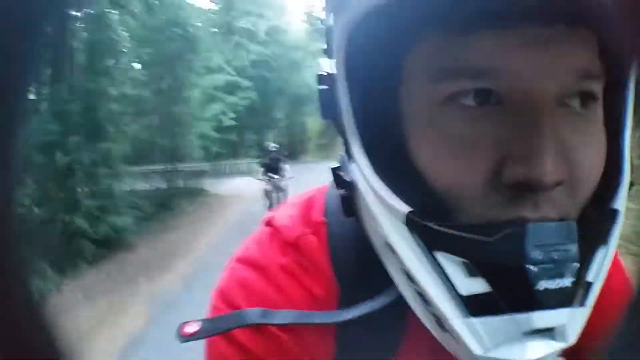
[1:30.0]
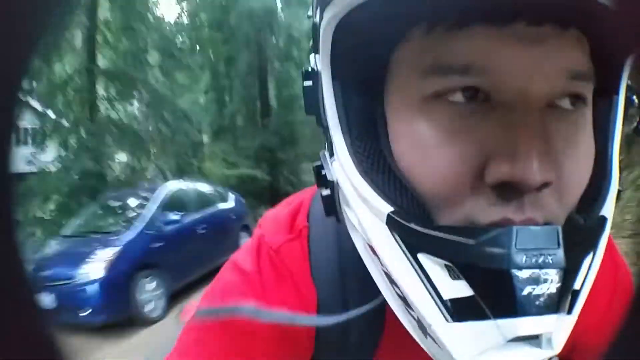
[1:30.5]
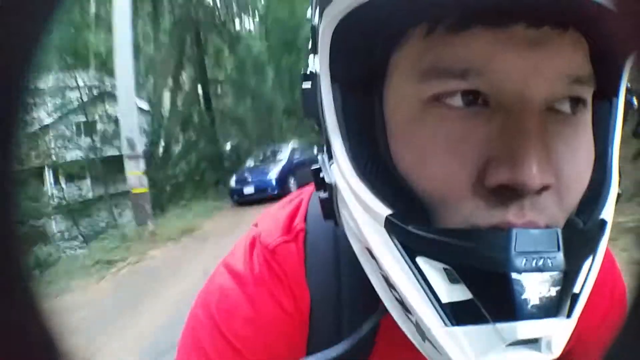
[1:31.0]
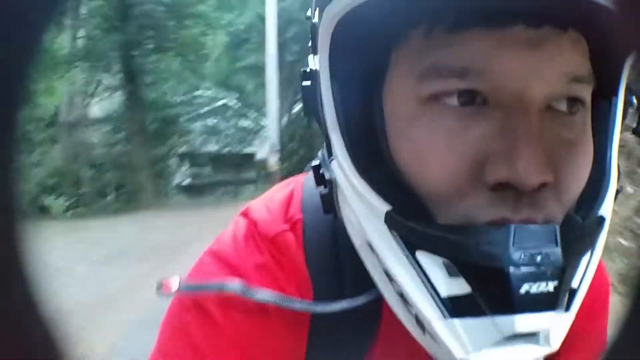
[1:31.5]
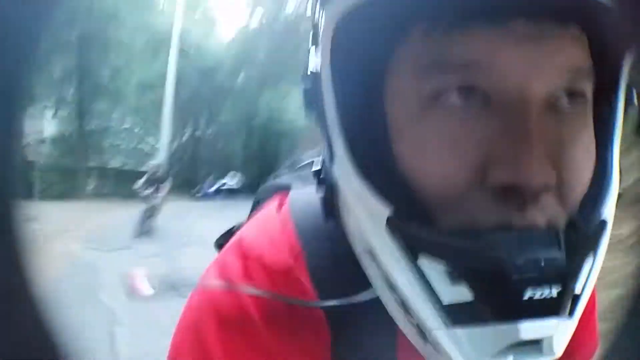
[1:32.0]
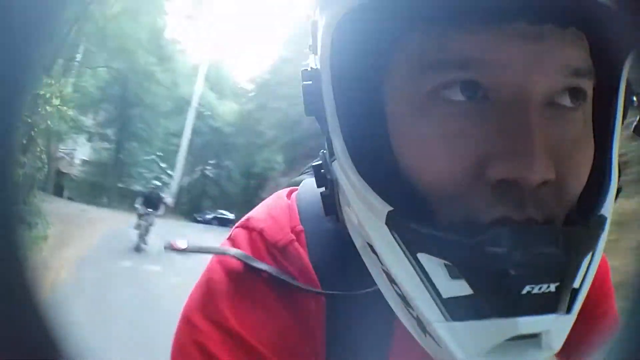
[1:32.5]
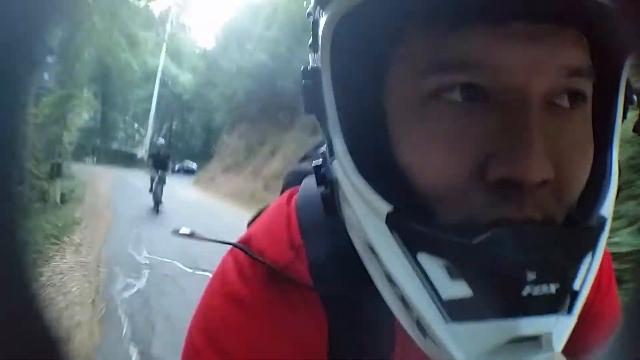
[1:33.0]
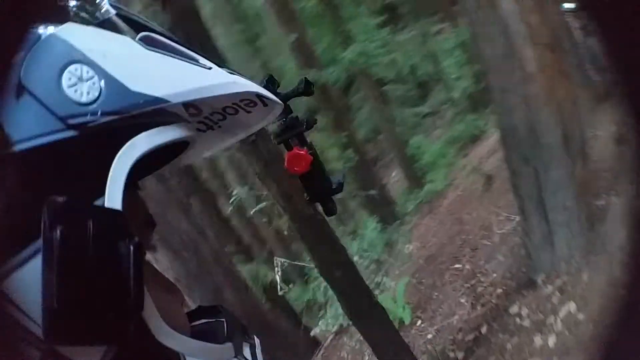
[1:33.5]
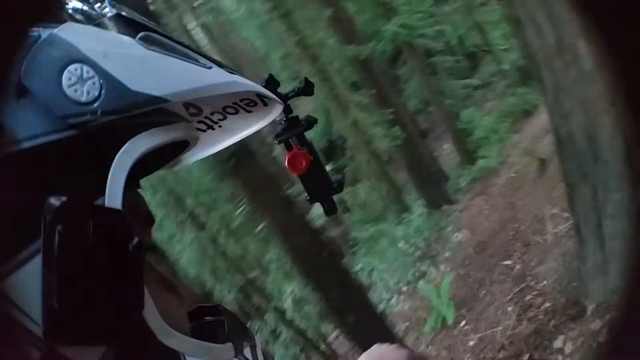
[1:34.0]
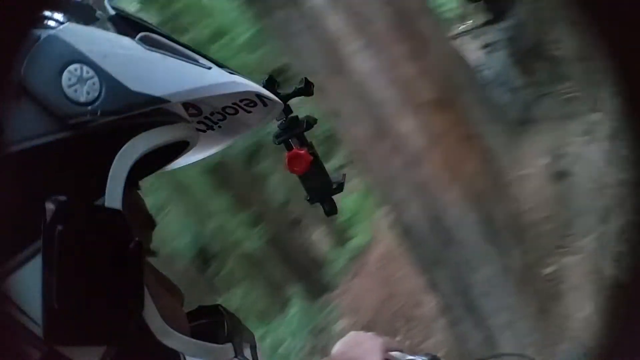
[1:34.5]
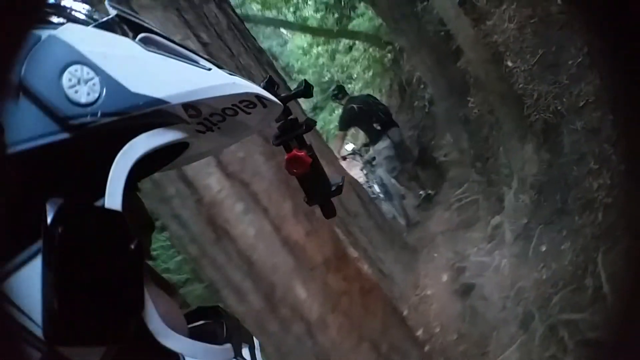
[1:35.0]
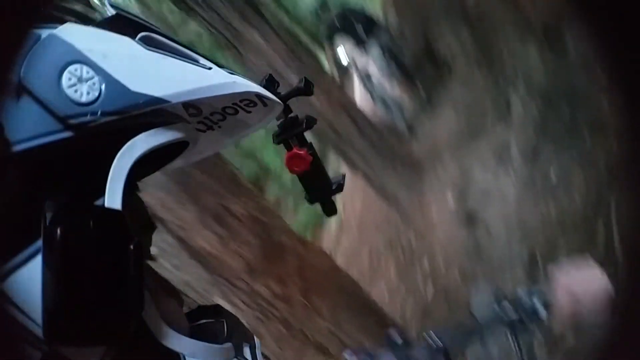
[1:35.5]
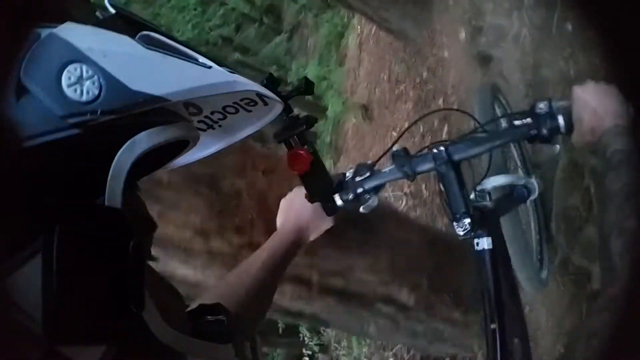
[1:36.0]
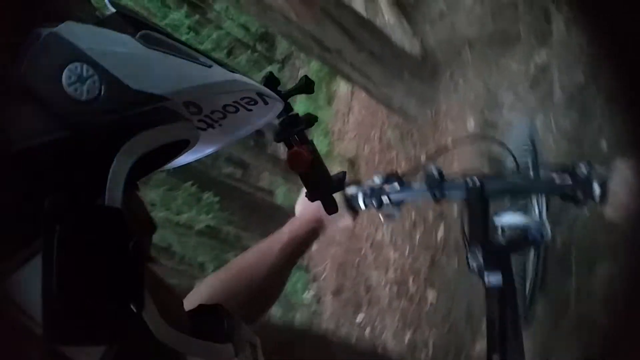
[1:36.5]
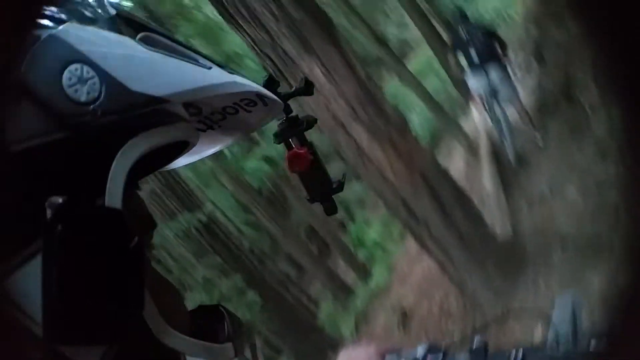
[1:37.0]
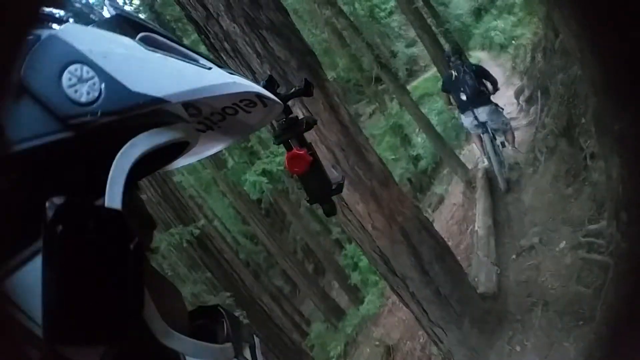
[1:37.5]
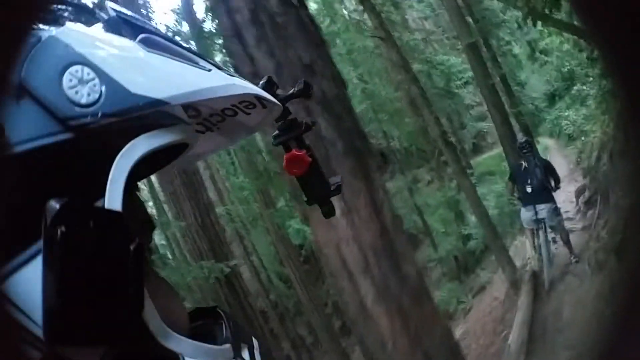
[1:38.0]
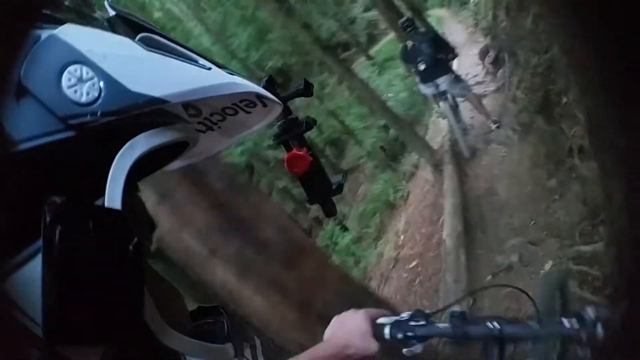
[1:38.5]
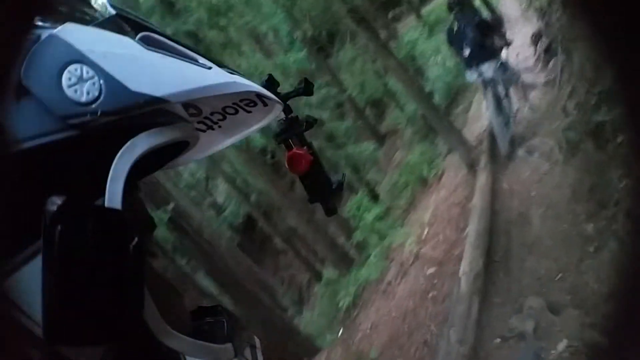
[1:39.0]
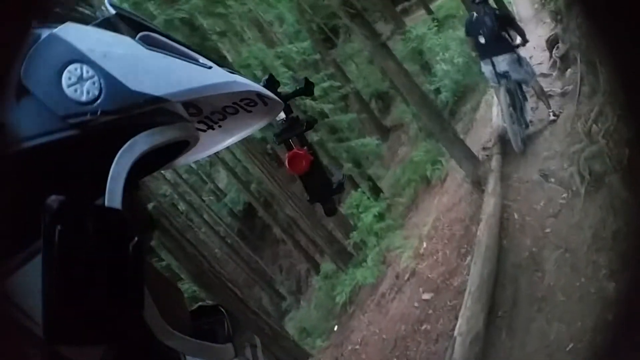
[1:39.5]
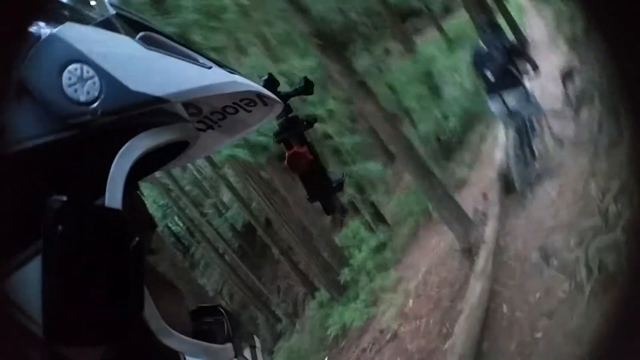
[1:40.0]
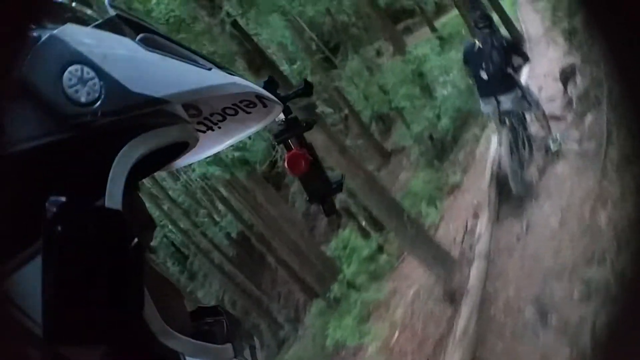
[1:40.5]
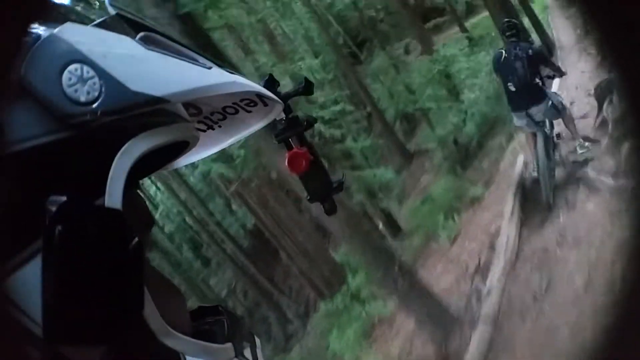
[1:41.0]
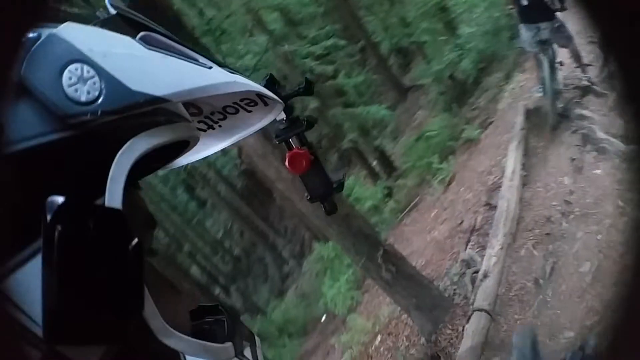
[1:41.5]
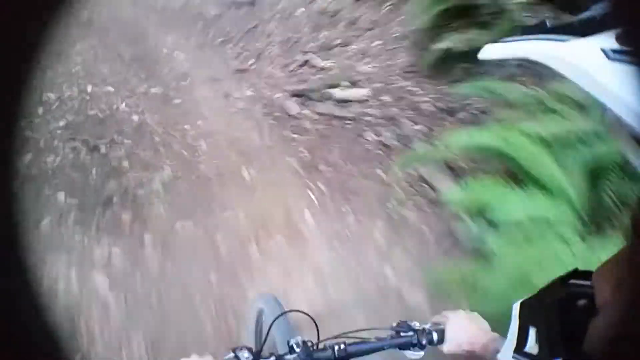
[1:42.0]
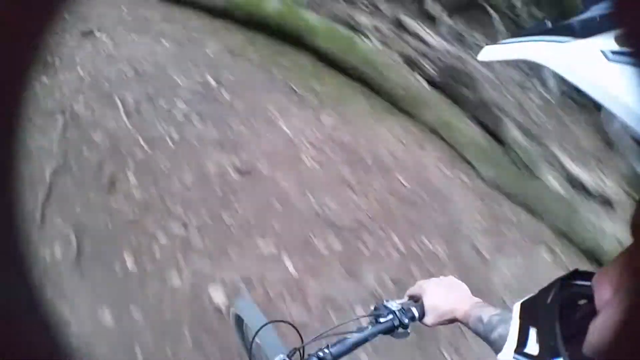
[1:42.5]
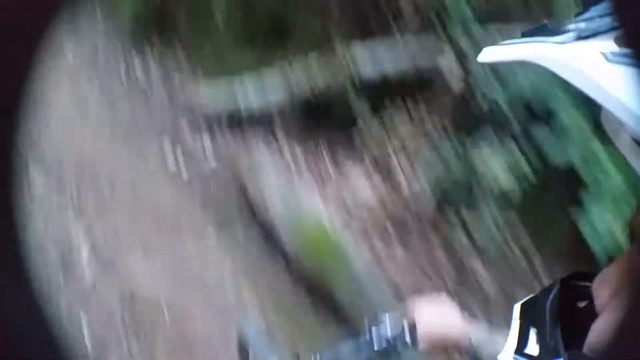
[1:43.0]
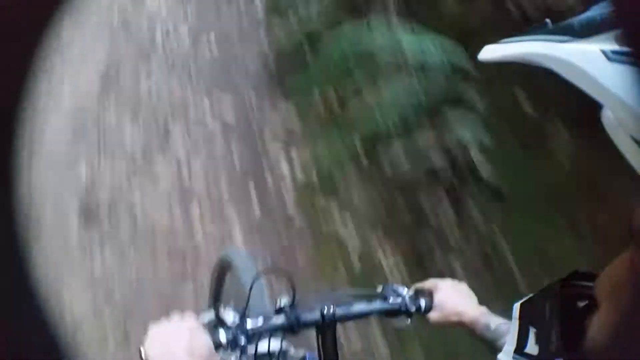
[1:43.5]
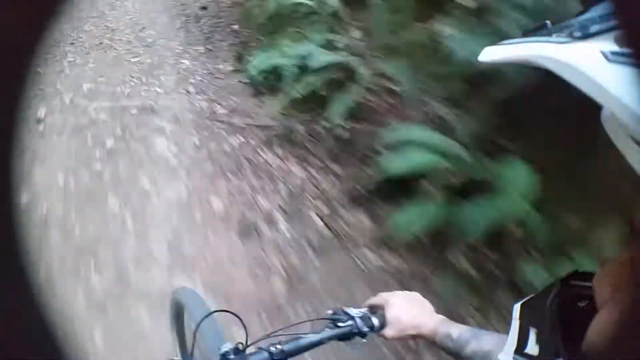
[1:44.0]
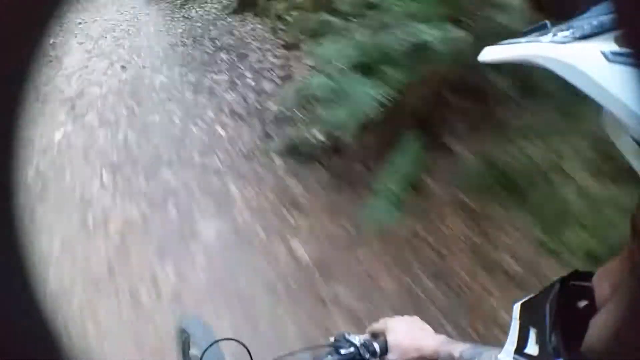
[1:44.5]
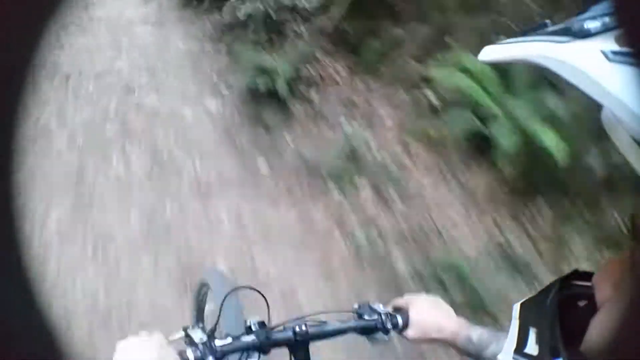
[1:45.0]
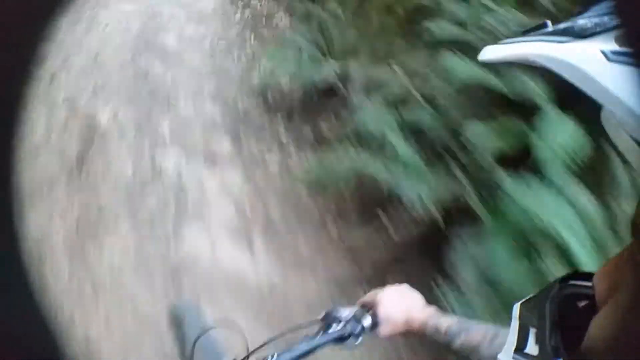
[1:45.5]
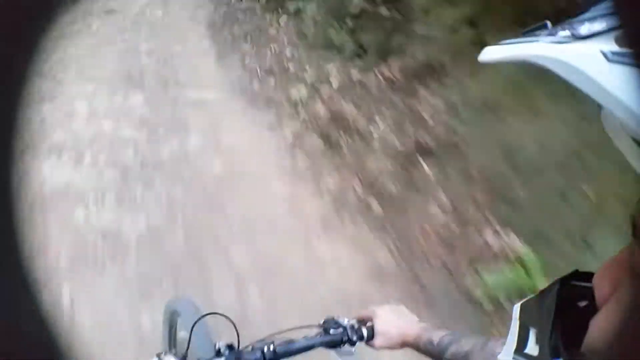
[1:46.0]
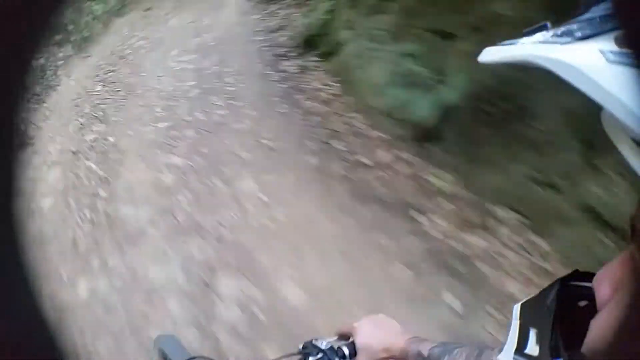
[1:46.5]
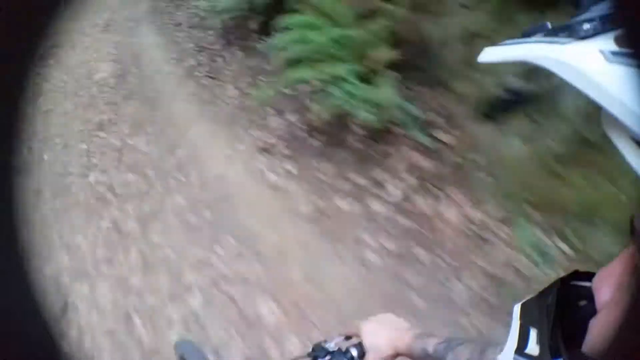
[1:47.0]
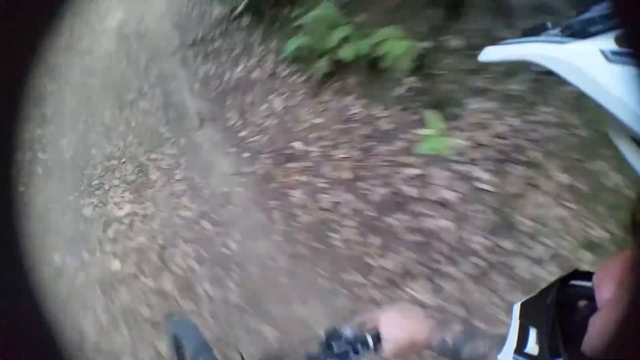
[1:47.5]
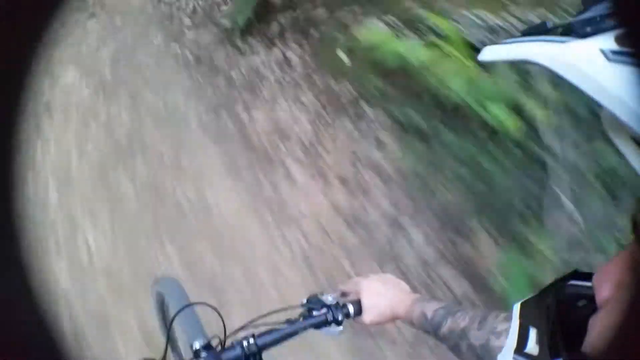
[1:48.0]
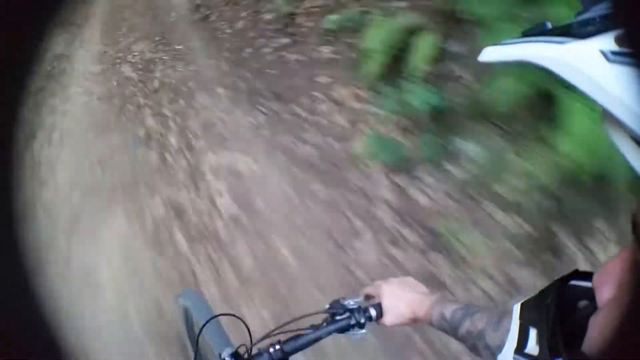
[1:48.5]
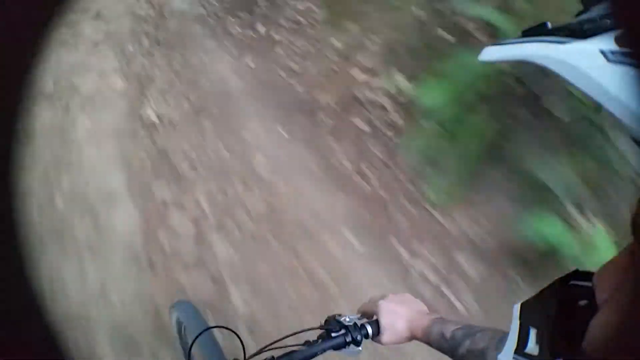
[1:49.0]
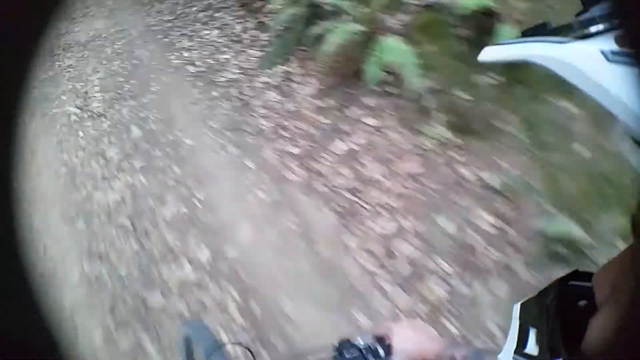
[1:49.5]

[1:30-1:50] Two young men are apparently experimenting with or displaying the capabilities of cameras mounted on their helmets as they ride in a country setting, a somewhat mountainous area filled with greenery. The man in front, seen at the start, wears a white helmet that comes underneath his lower lip and encapsulates his head; his eyes are not protected. In the background, the second bicyclist in the dark shirt pedals up, much more on the left side of the road. As they pedal along, some homes and cars parked on the left side of the road come into view. Suddenly the view switches to the red-shirted bicyclist's perspective on a very narrow, more dangerous part of the ride, a dirt area that might be very close to the edge of the mountain.